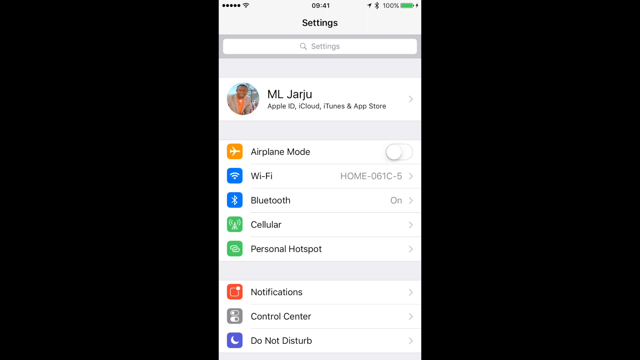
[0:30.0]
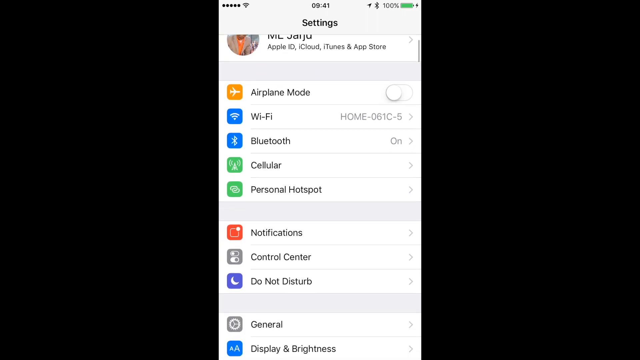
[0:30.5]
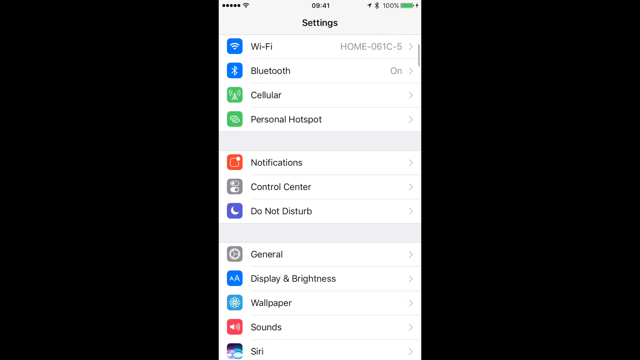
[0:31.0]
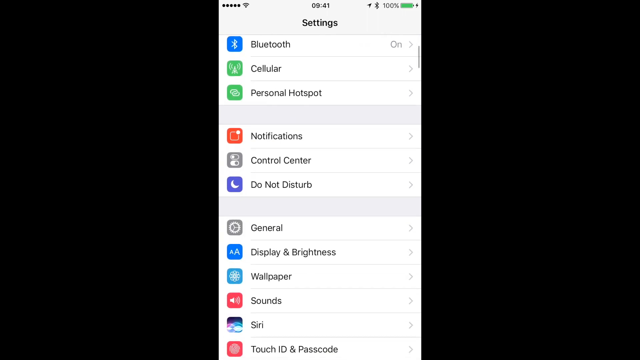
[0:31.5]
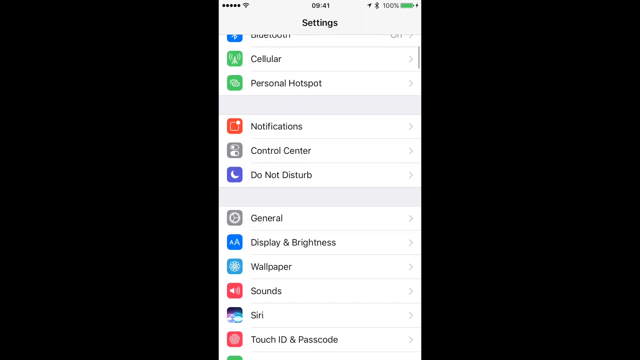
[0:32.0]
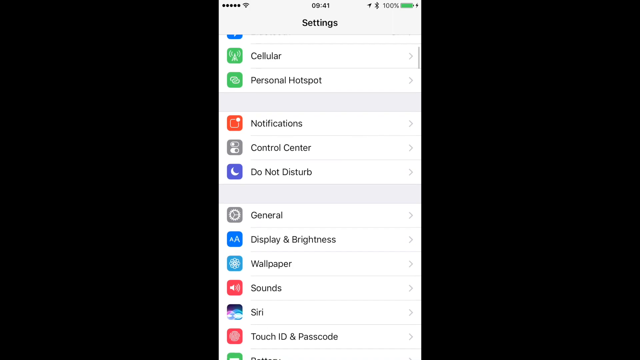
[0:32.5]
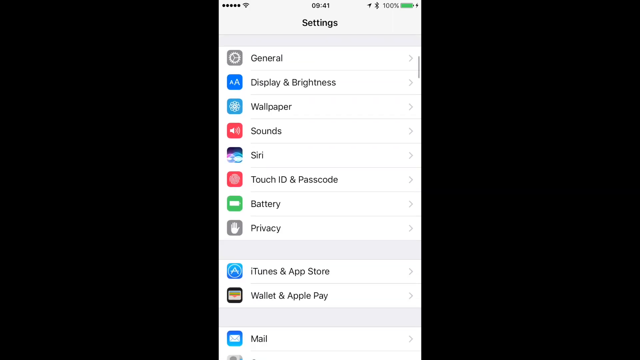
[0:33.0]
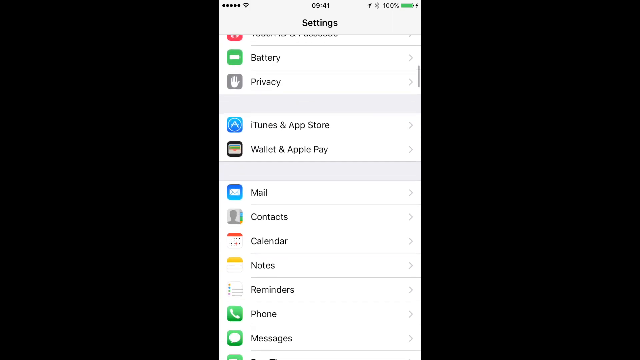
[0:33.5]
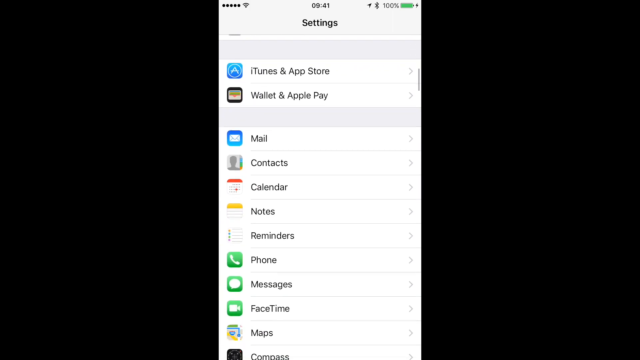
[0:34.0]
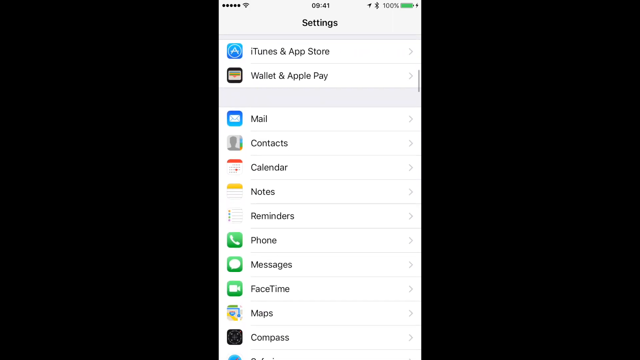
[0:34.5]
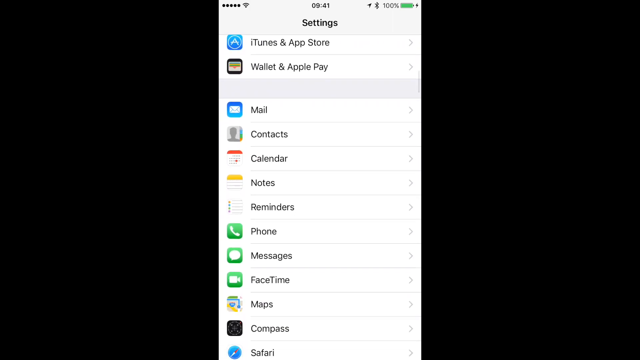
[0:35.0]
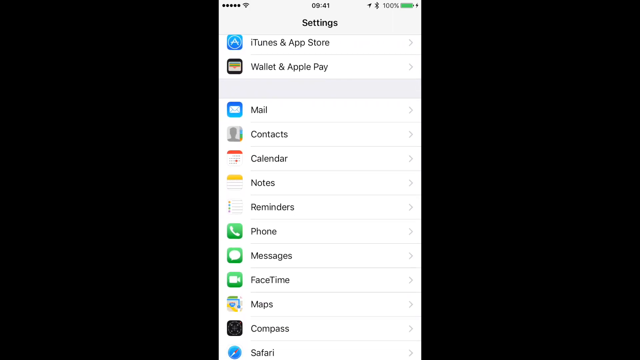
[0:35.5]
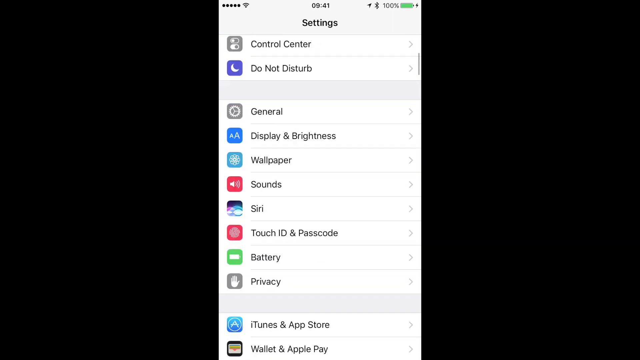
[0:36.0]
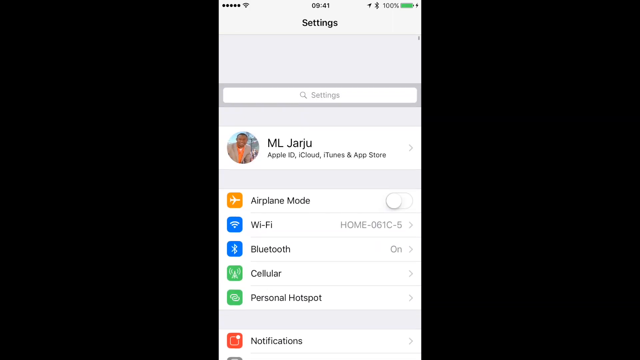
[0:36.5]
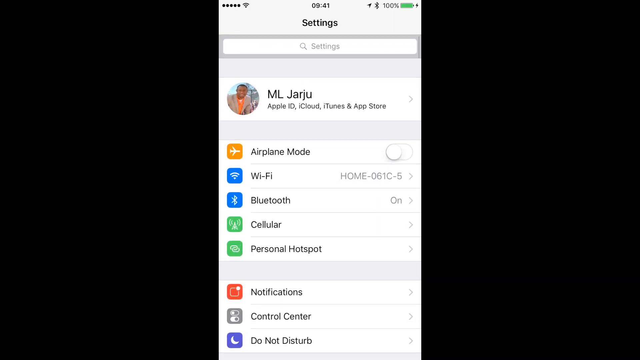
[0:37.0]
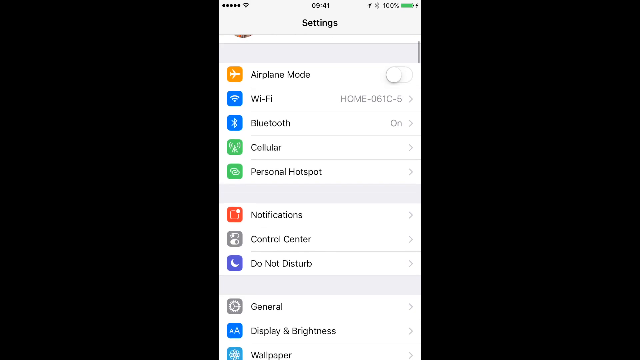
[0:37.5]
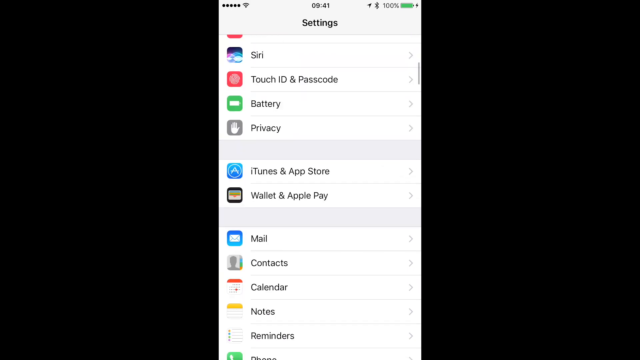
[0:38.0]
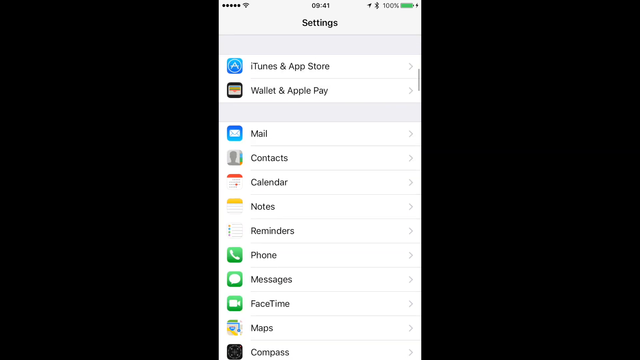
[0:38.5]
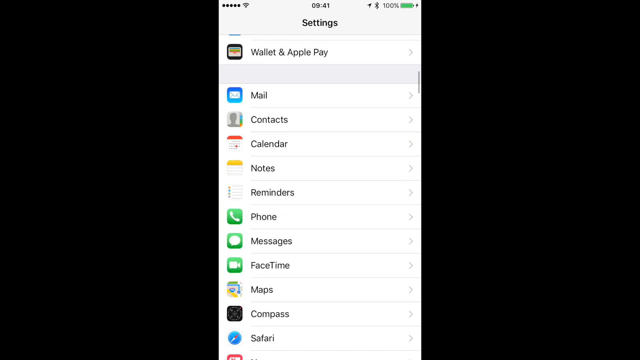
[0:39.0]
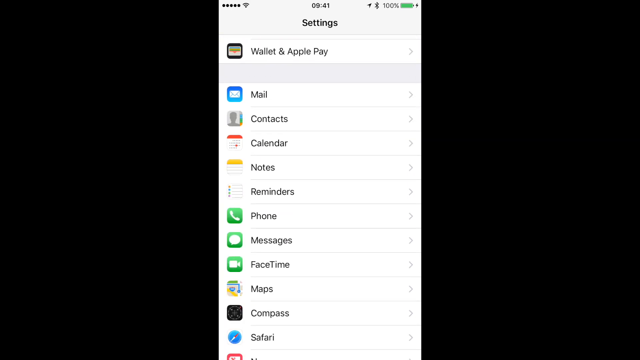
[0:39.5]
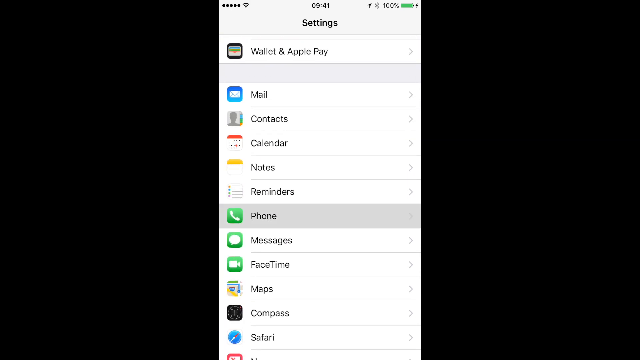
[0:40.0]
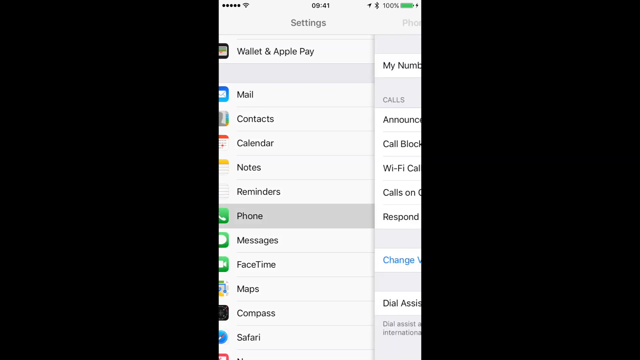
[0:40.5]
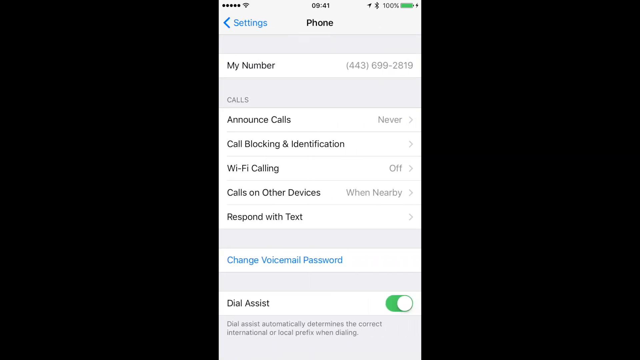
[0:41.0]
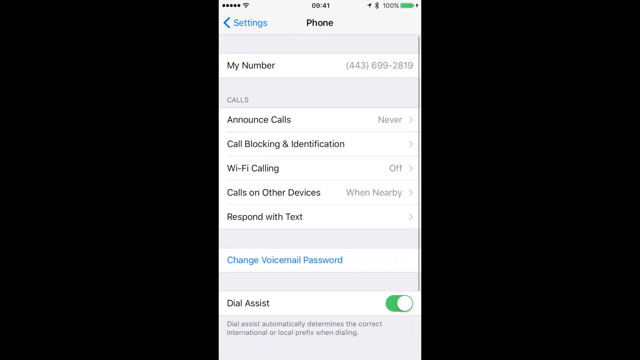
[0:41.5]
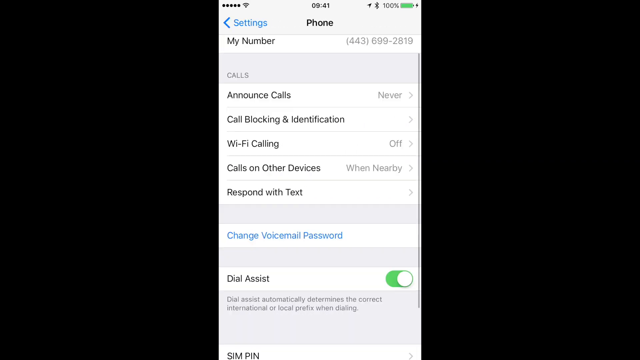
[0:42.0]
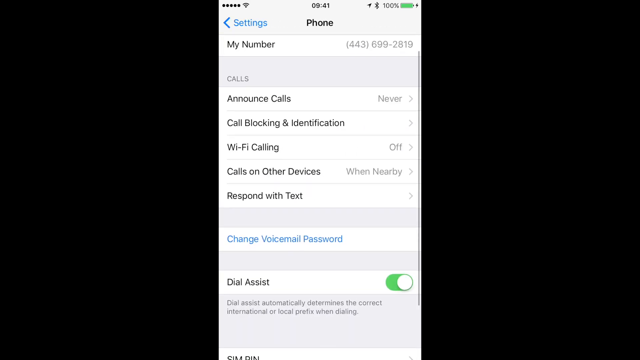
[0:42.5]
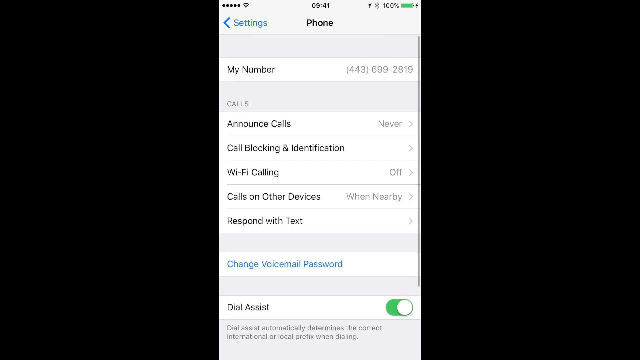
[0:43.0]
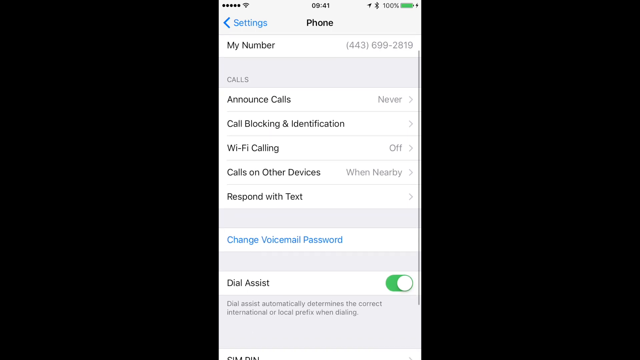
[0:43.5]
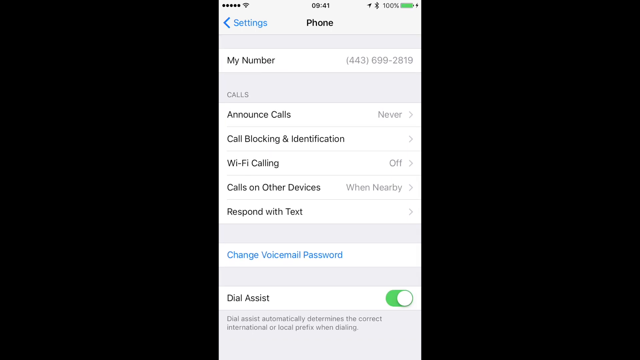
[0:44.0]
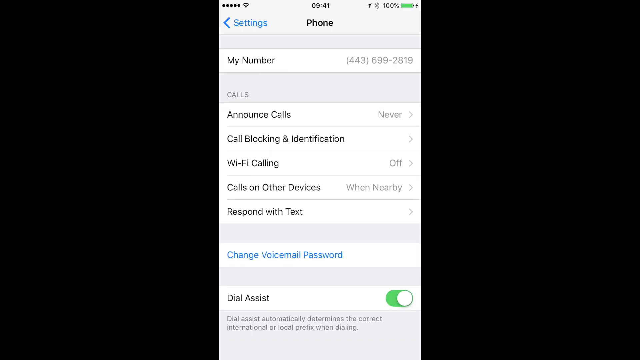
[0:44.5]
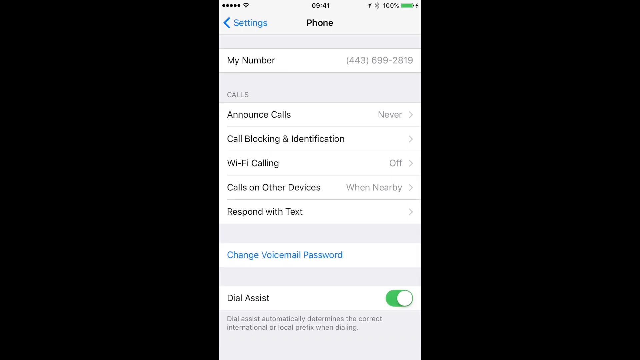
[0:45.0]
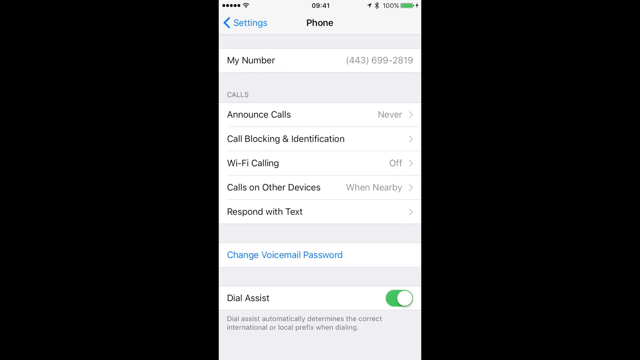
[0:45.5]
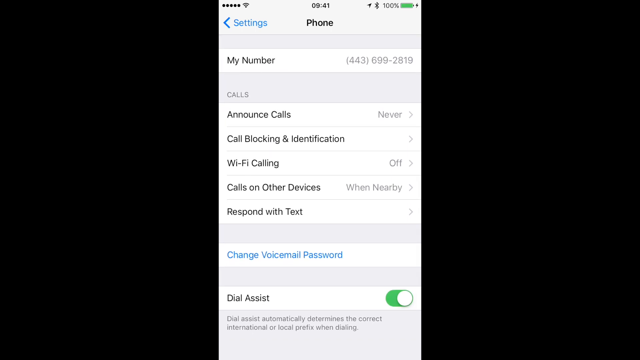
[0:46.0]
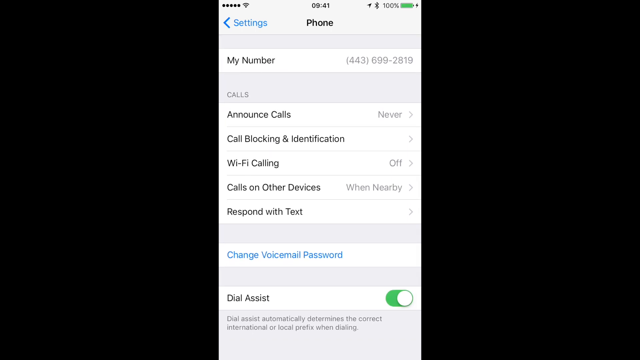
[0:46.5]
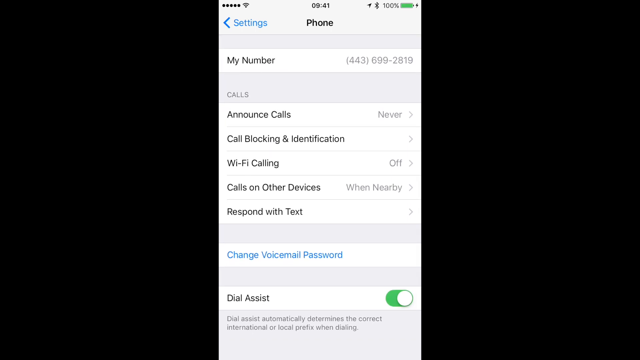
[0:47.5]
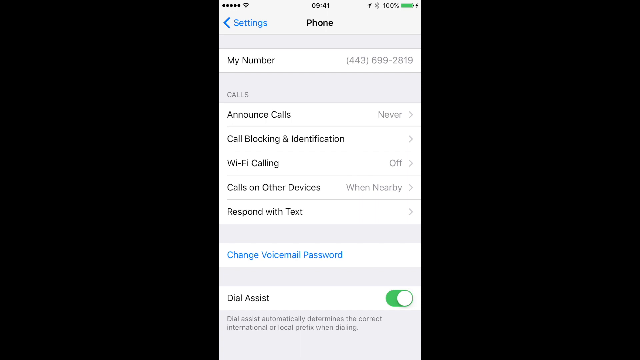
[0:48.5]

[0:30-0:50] The mobile device's screen is in the center of the all-black background. The screen scrolls down at a slow pace, briefly stops, then scrolls down fast, comes to a rest, and scrolls back up very quickly and abruptly. Once it reaches the top of the page, it scrolls down slightly and back up toward the top, where it rests before jumping down to a different section of the settings. It stops on the area containing mail, contacts, calendar, notes, reminders, phone, messages, FaceTime, Maps, Compass and the Safari web browser, and stays on this spot for several seconds.